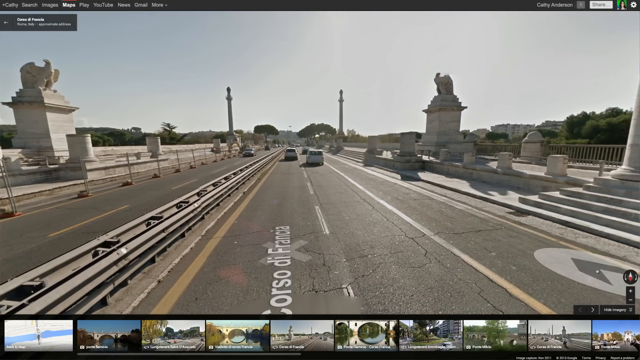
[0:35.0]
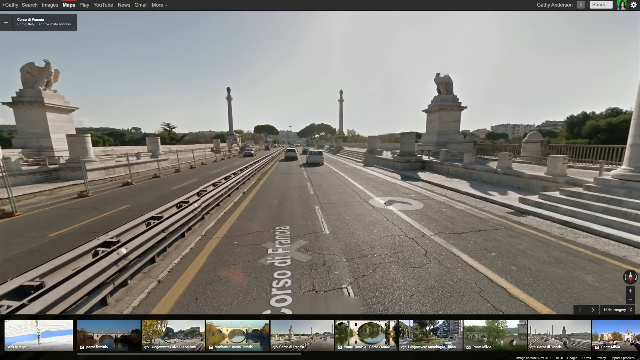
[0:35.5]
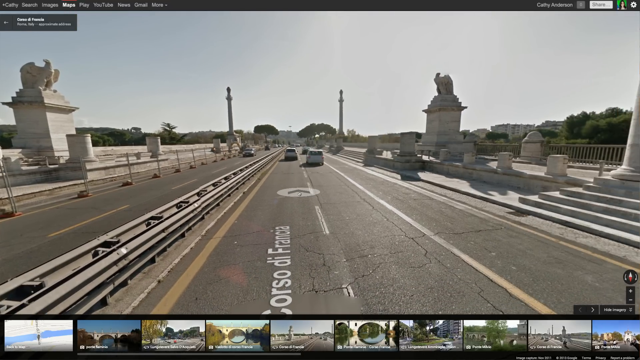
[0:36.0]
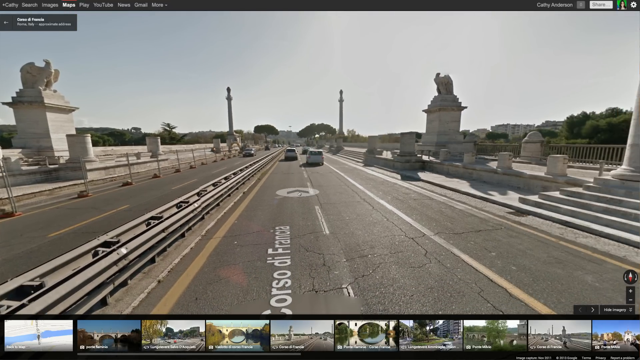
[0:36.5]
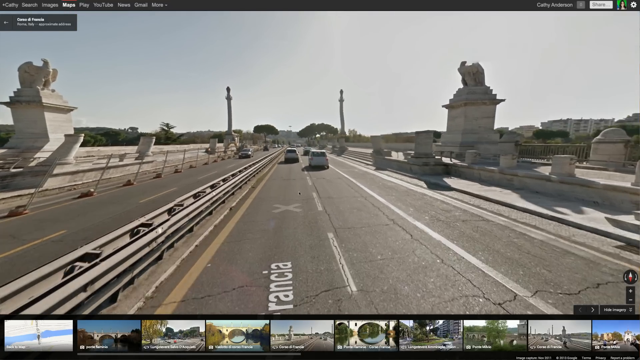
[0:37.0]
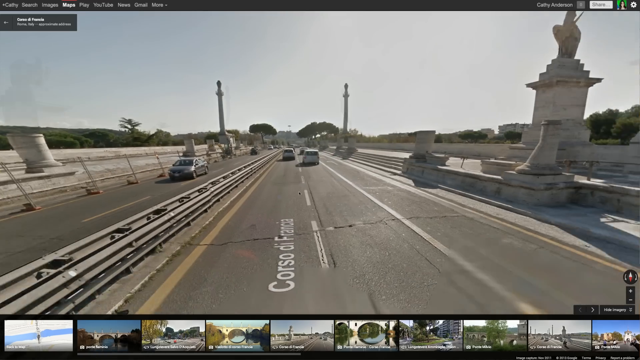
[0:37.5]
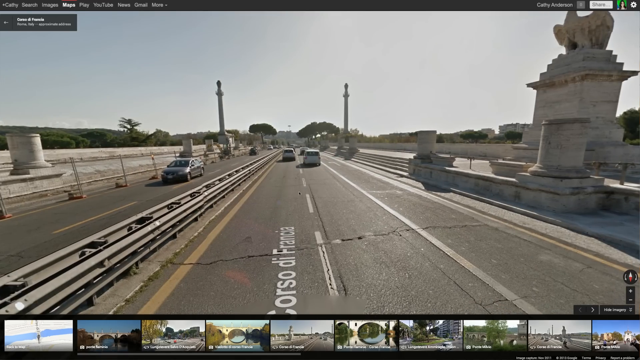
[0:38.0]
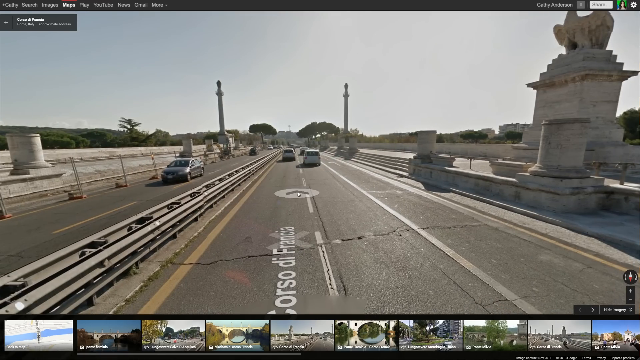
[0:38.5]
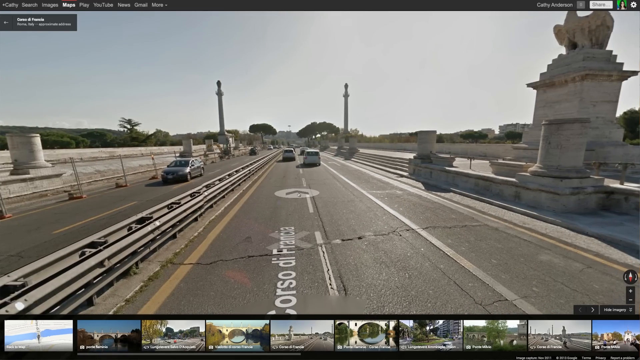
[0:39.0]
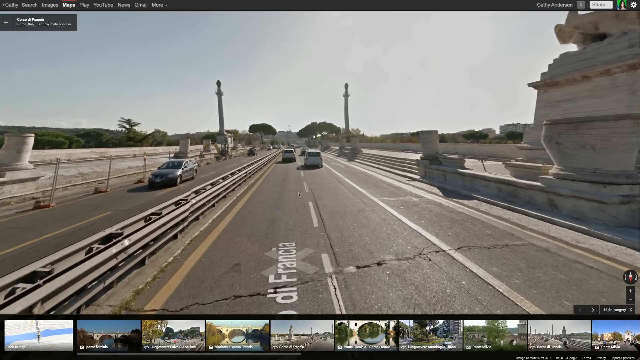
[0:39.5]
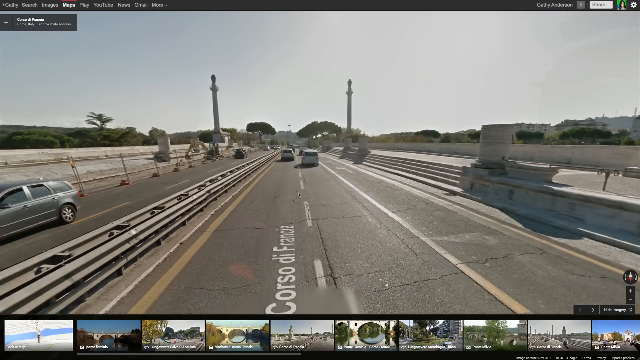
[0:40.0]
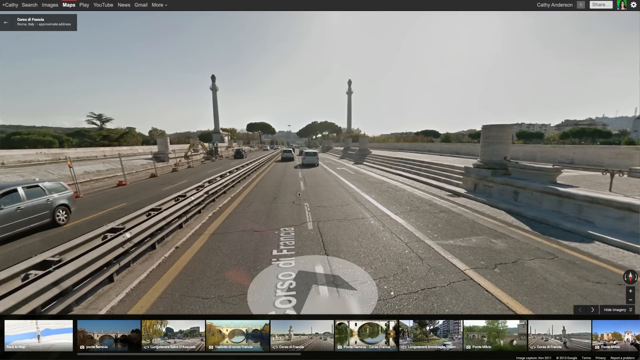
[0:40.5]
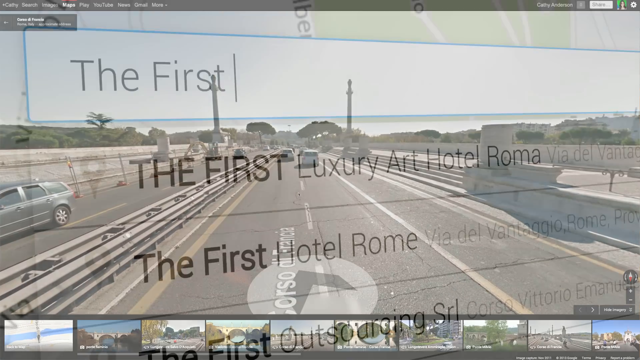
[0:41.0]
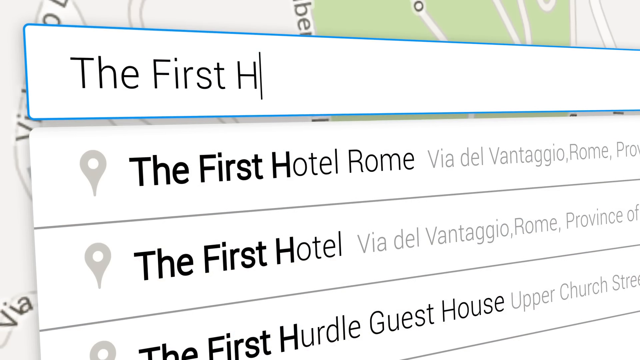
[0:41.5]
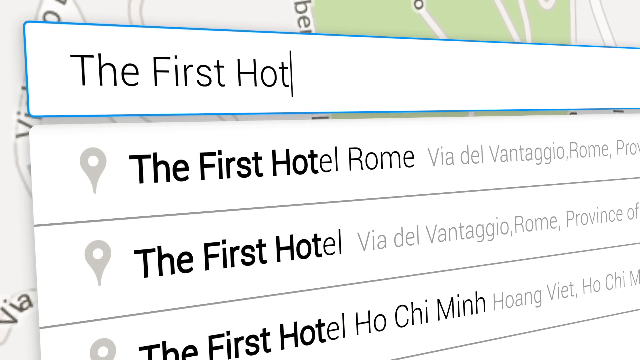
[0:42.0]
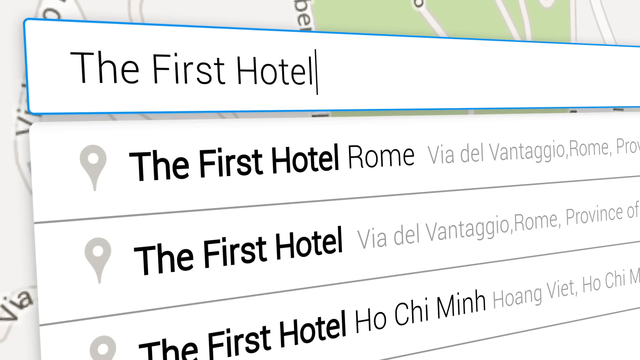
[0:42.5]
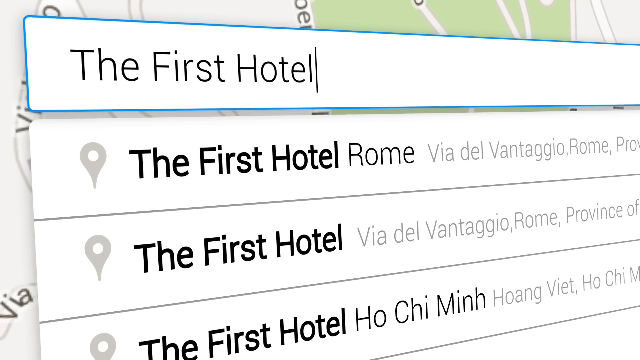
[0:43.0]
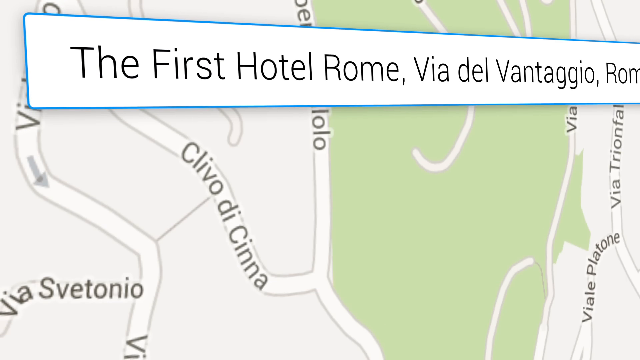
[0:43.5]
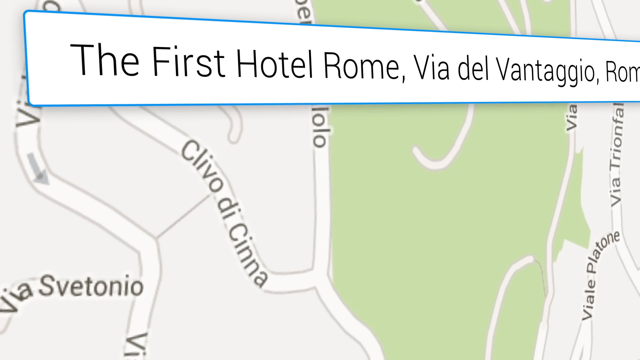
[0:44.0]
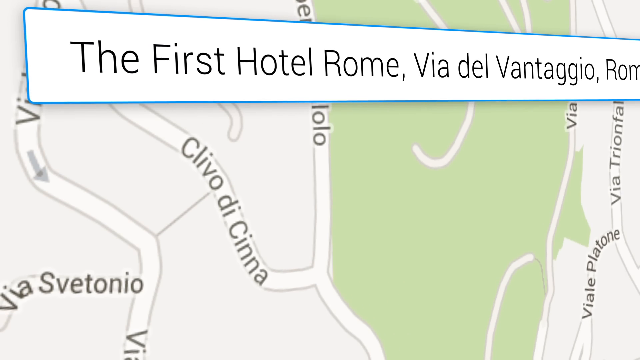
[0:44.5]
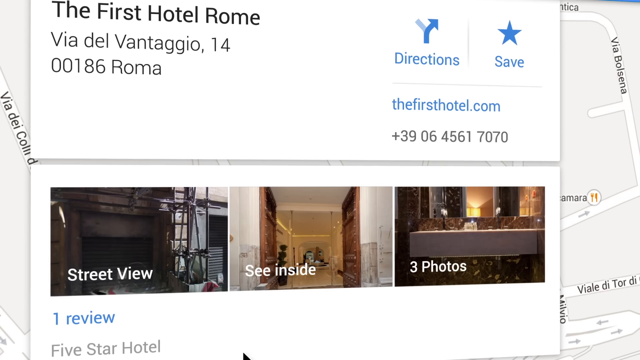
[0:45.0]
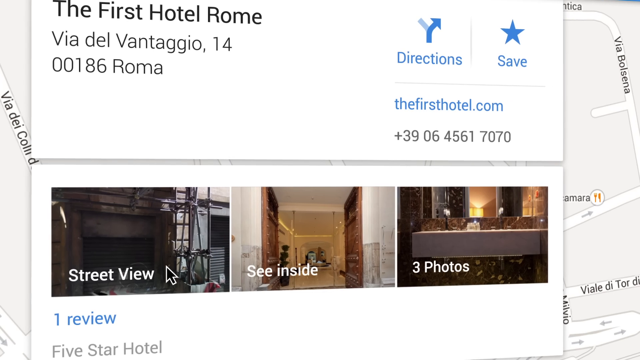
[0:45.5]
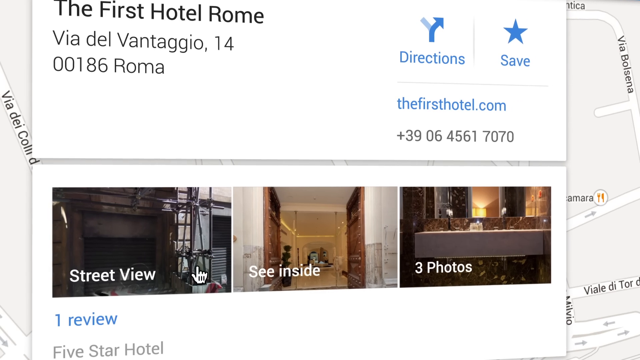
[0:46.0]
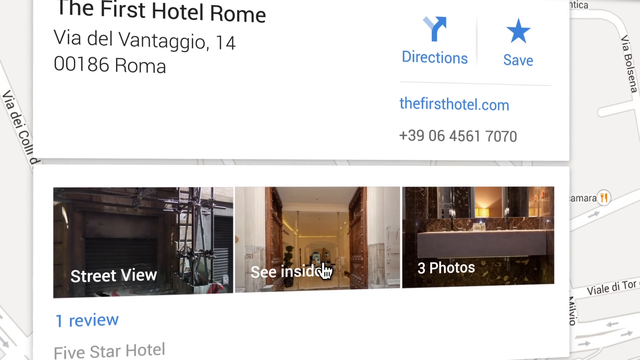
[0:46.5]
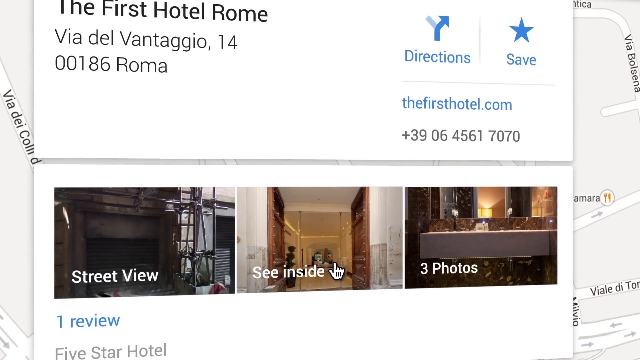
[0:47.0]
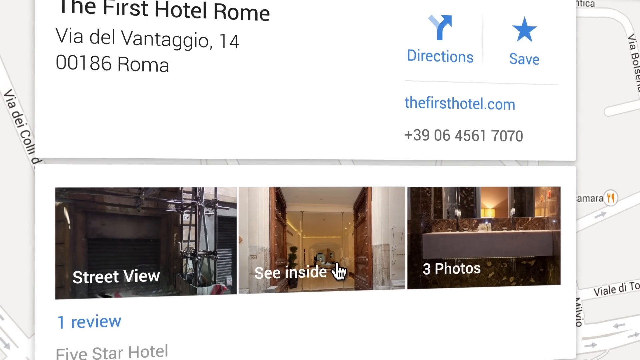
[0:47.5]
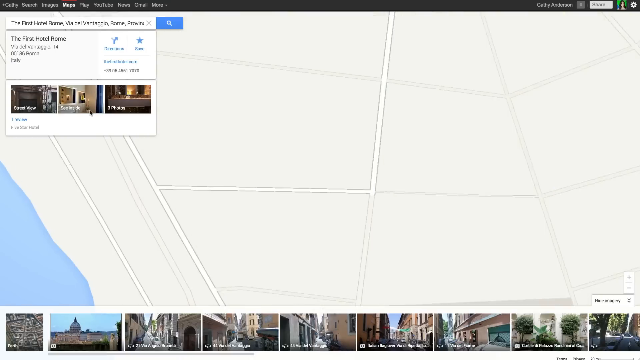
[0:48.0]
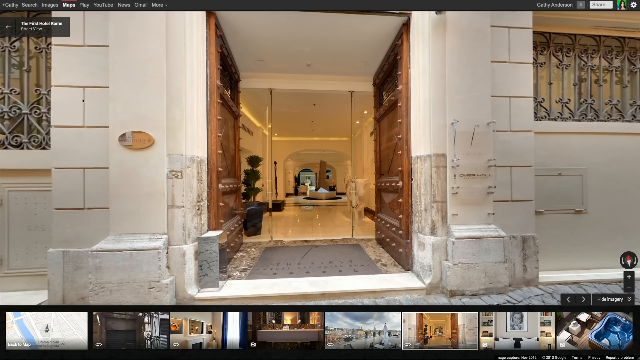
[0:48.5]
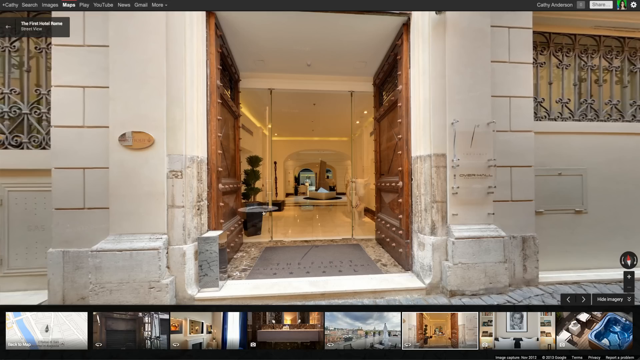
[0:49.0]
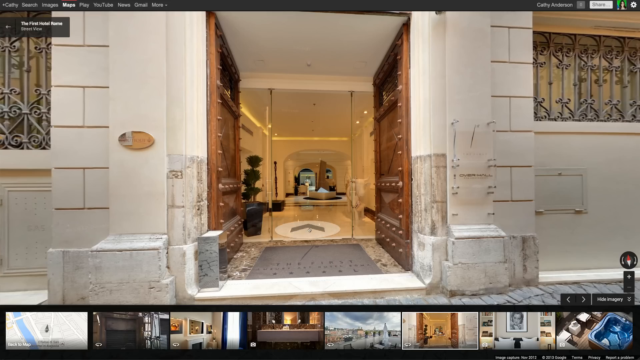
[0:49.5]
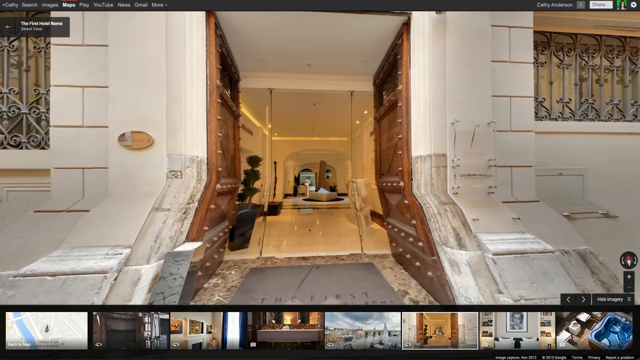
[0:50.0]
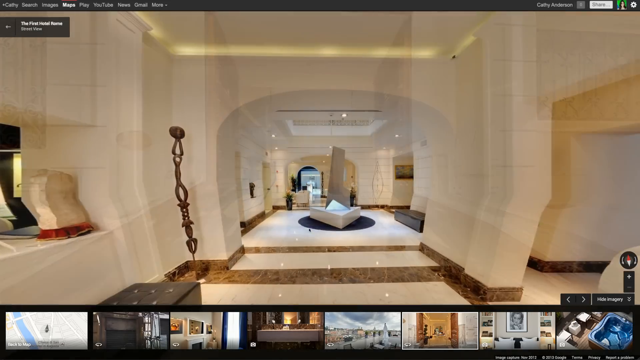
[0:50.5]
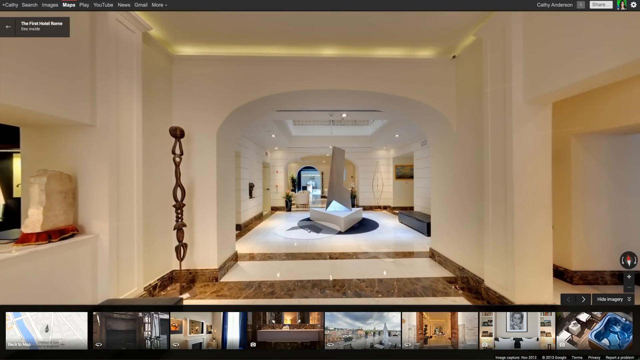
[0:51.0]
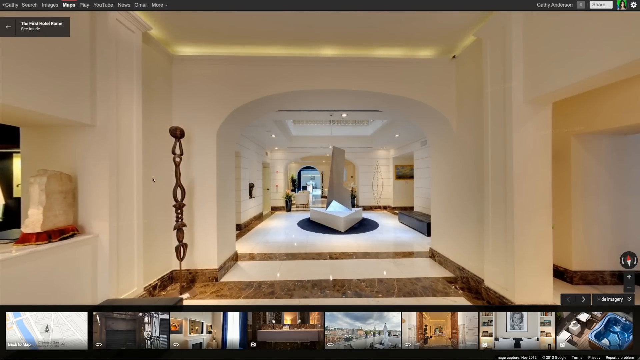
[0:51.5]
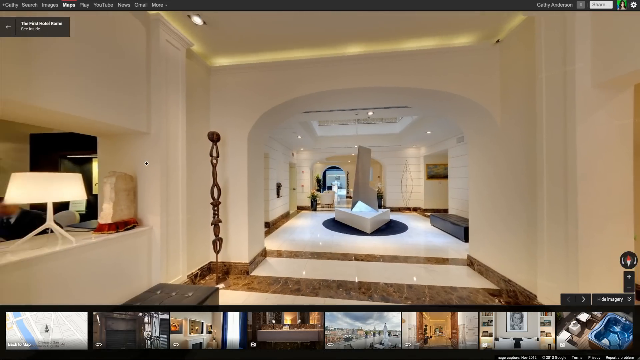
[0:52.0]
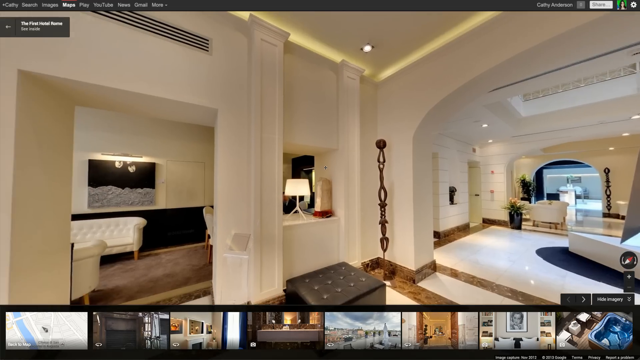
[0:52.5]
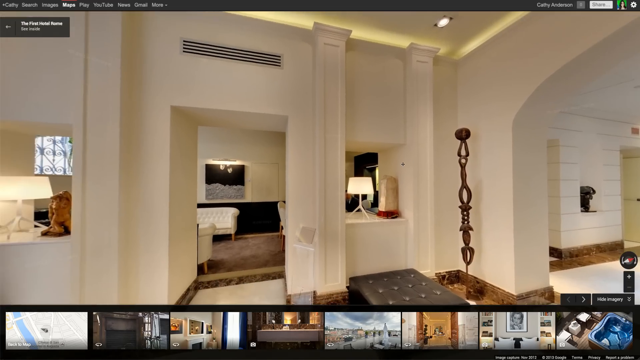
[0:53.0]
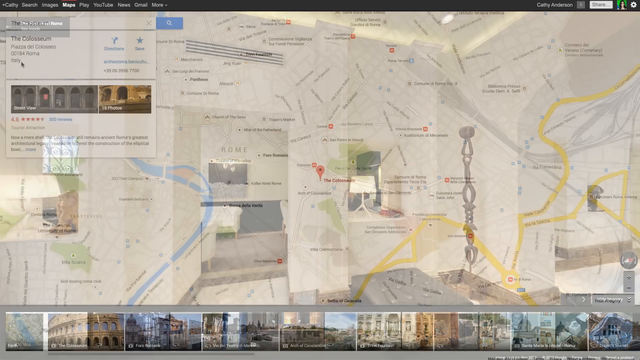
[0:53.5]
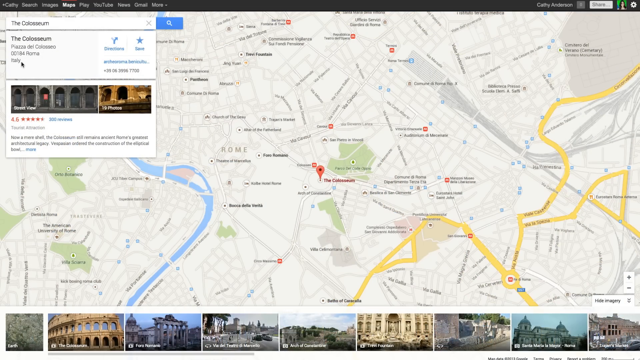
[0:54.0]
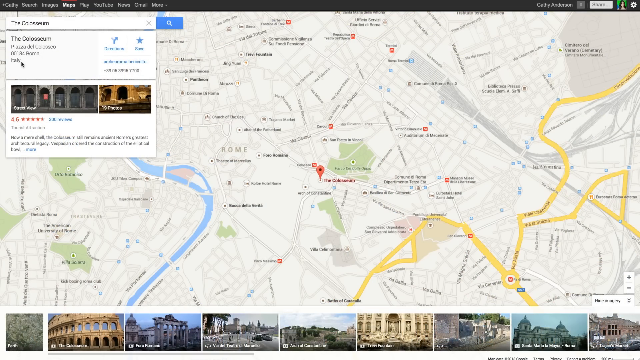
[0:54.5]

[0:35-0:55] Someone moves forward through the street view of Corsi di Francia. Then a search bar appears, and they search for the first hotel of Rome; several options come up, followed by three different tabs, including street view and what's inside. They click on the what's inside tab and move through the inside of the hotel, which looks very luxurious and white. They go through double doors that are opening.